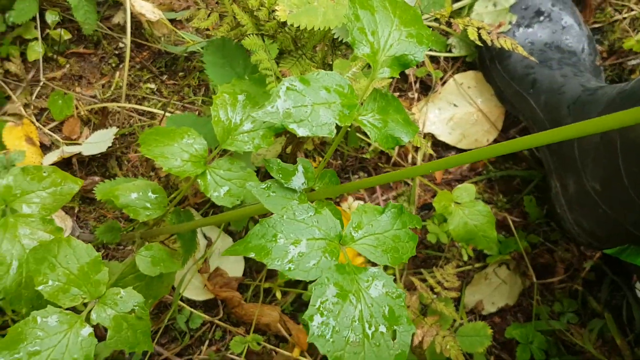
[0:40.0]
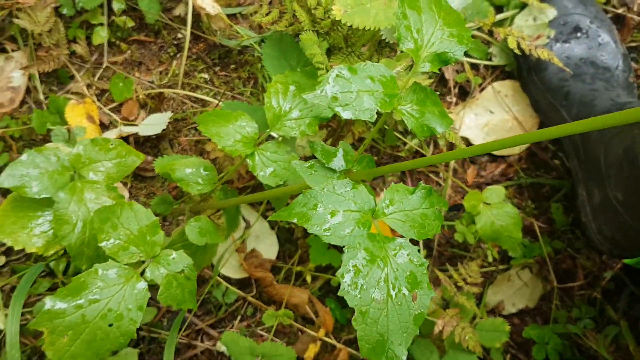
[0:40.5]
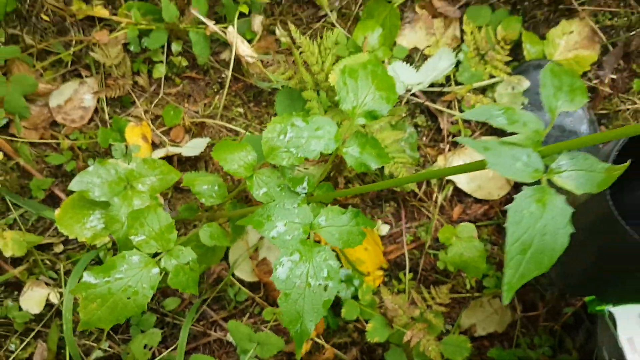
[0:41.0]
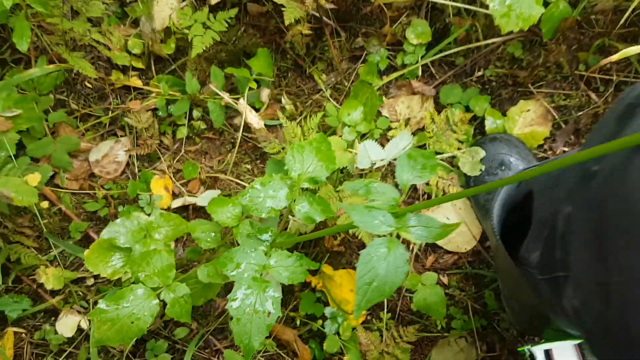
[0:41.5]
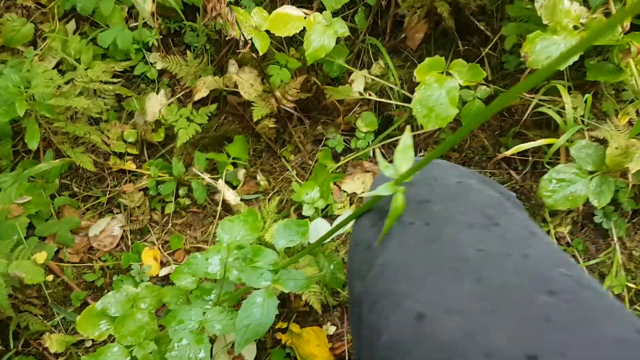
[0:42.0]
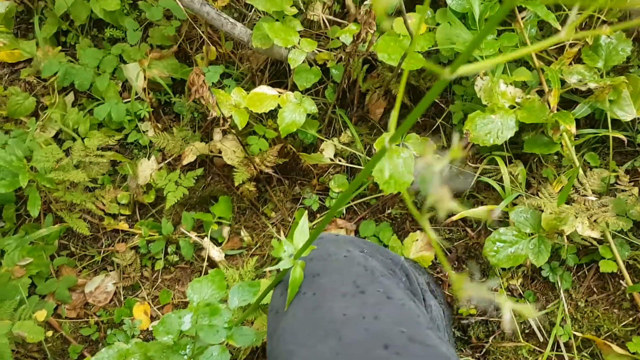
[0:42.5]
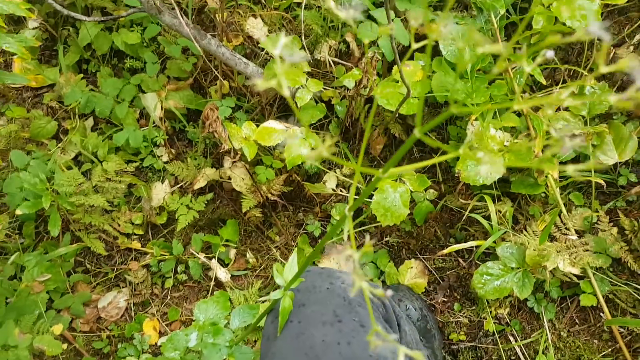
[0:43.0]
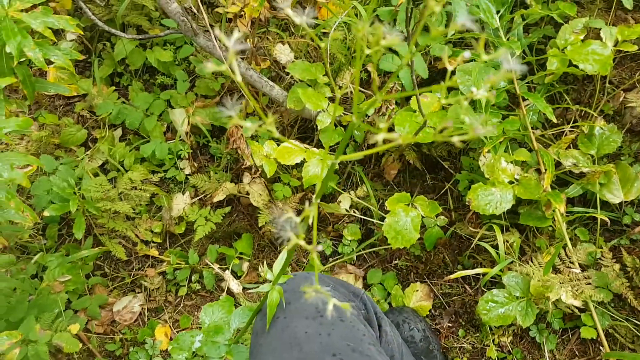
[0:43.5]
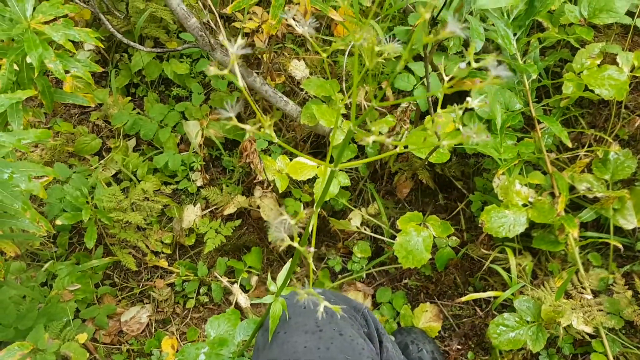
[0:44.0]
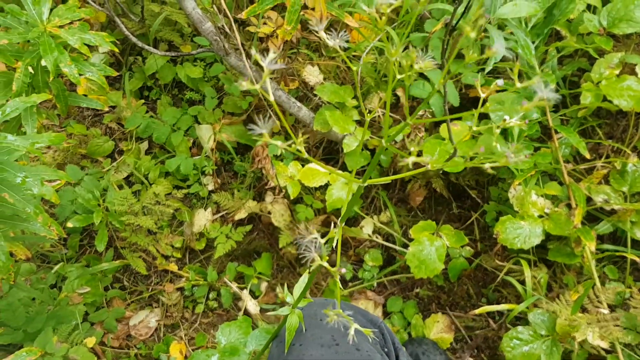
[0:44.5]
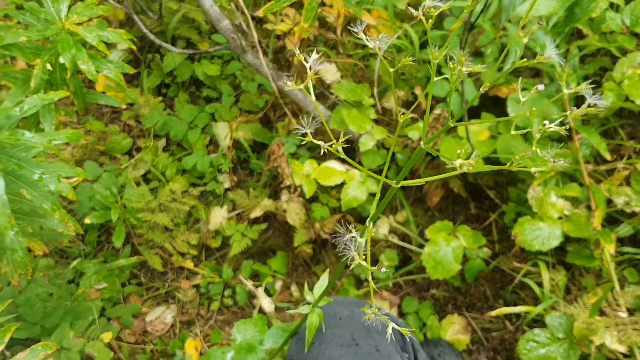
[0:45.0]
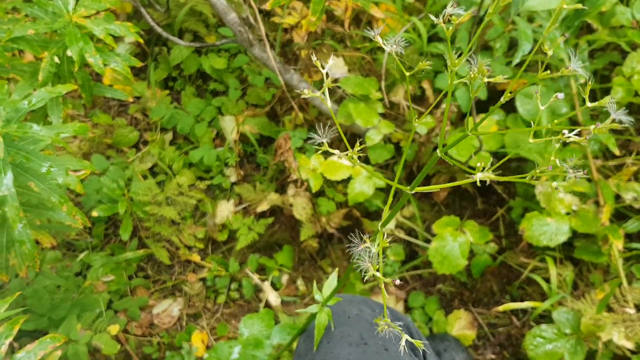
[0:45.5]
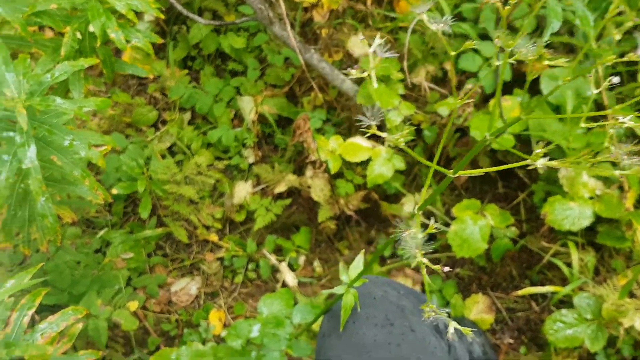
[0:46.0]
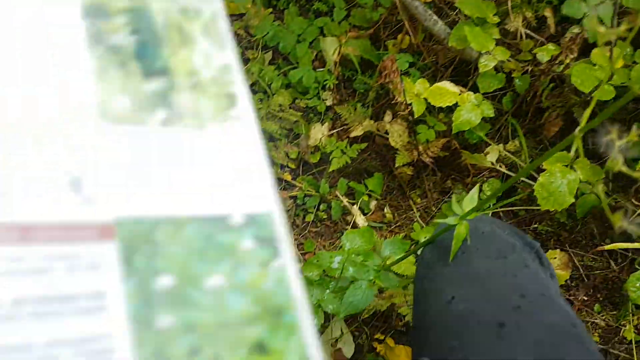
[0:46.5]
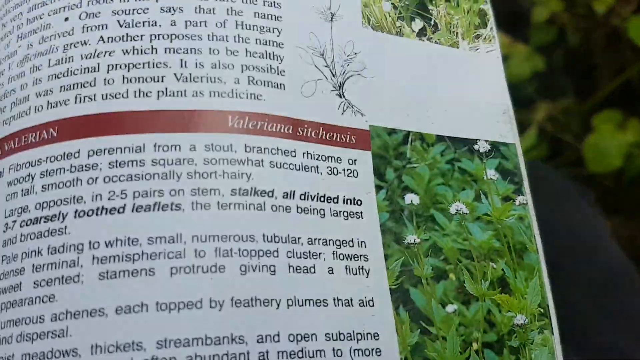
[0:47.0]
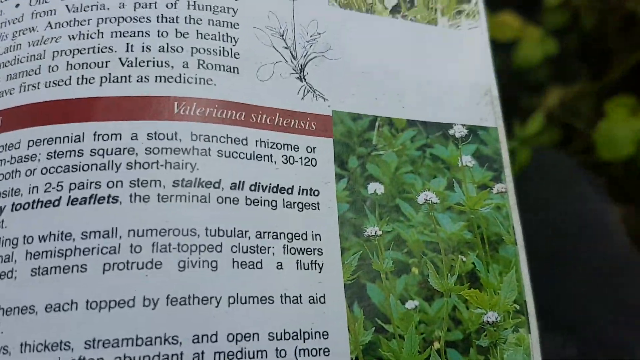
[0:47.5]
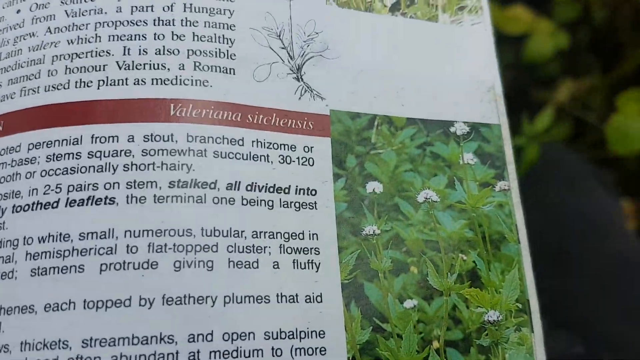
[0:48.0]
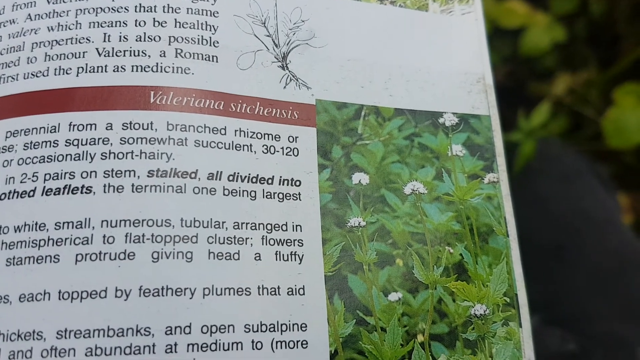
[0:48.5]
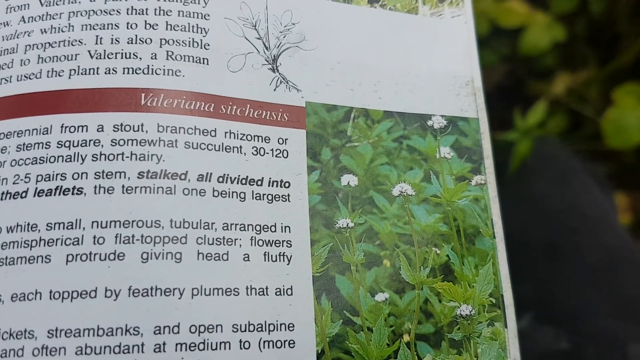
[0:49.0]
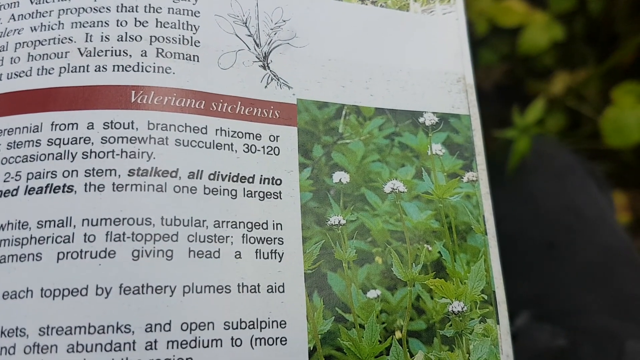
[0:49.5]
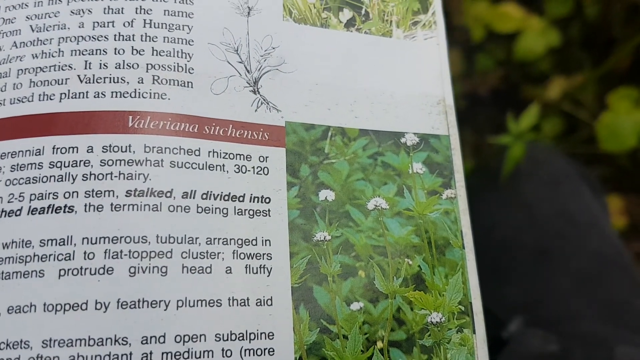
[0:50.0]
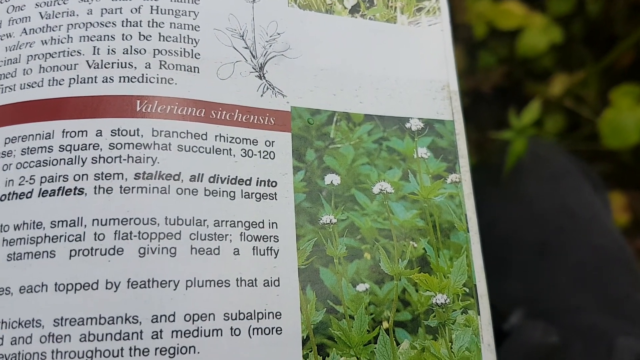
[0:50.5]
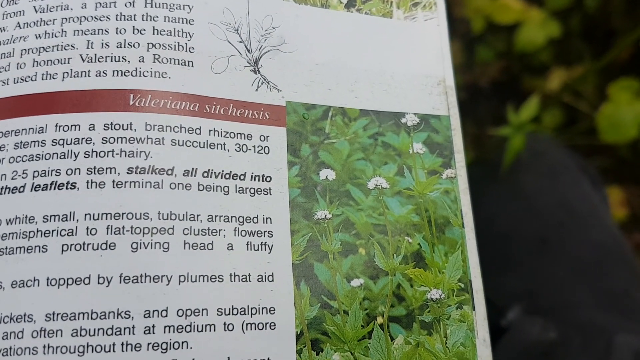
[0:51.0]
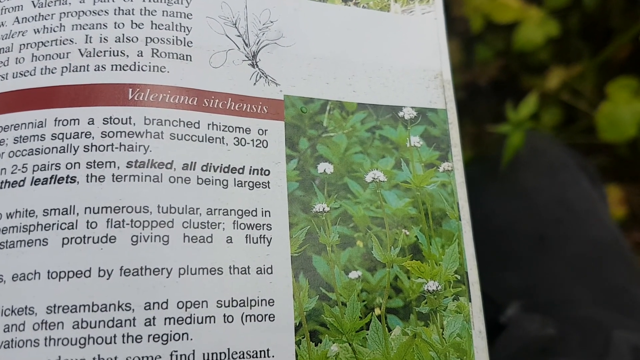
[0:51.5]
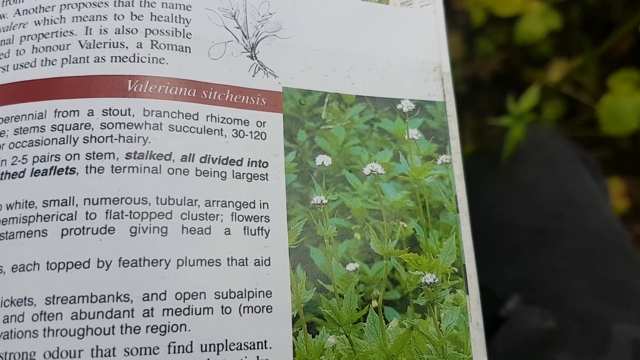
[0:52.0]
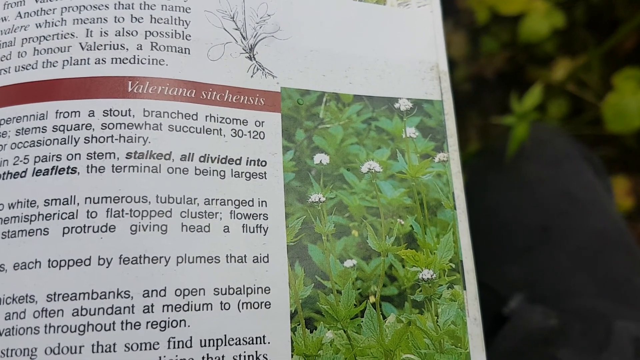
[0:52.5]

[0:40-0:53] The camera zooms out, moving back from the bottom of the plant and its leaves to the top of the plant and the bits that used to be flowers. It then pans left to a book, leaflet or some other sort of text that identifies the Valeriana sitchensis plant, with a photo and text about the plant, its features and how to identify it.